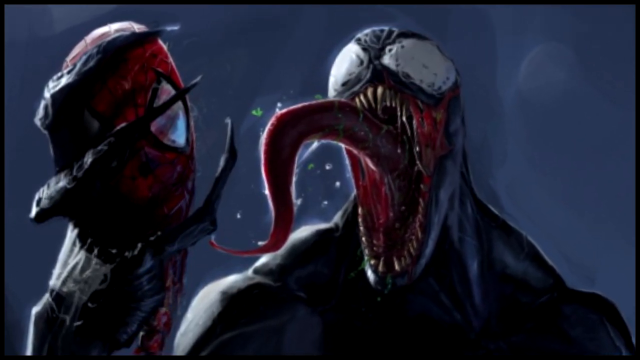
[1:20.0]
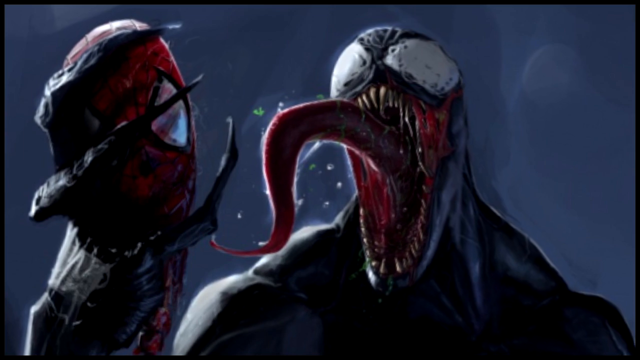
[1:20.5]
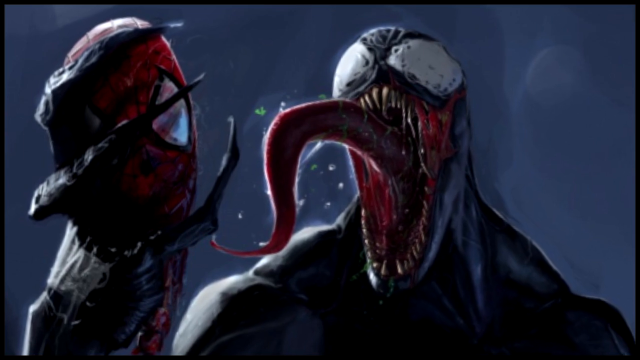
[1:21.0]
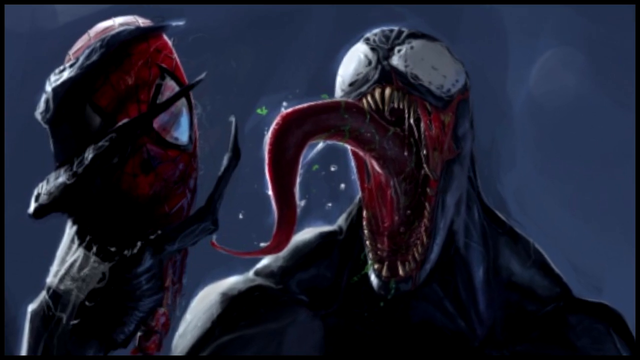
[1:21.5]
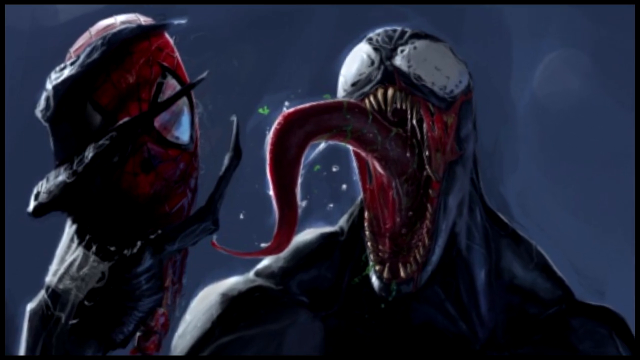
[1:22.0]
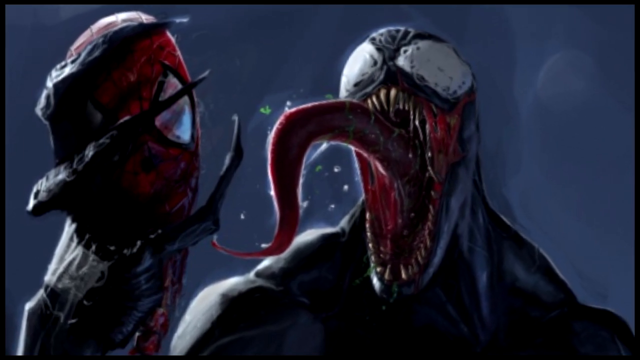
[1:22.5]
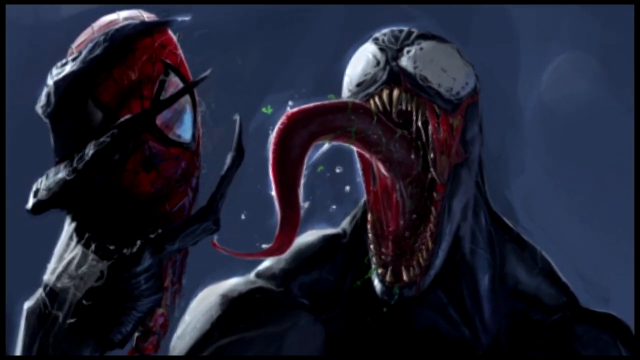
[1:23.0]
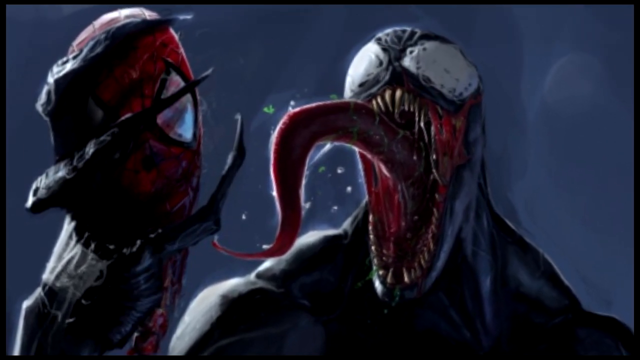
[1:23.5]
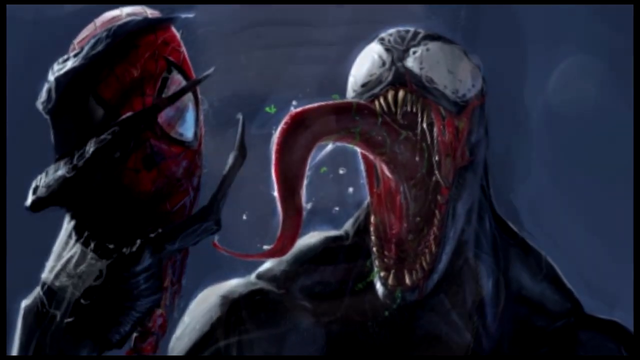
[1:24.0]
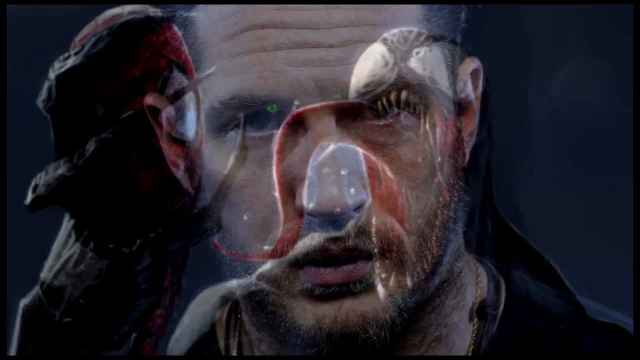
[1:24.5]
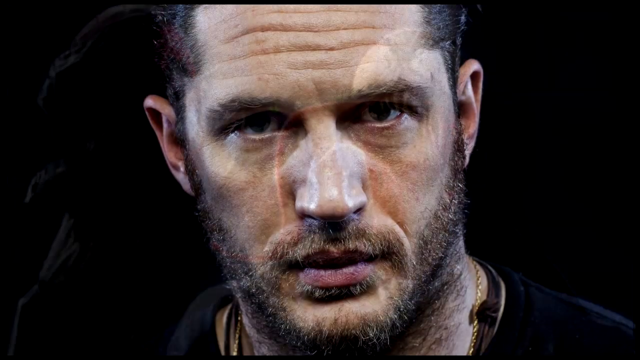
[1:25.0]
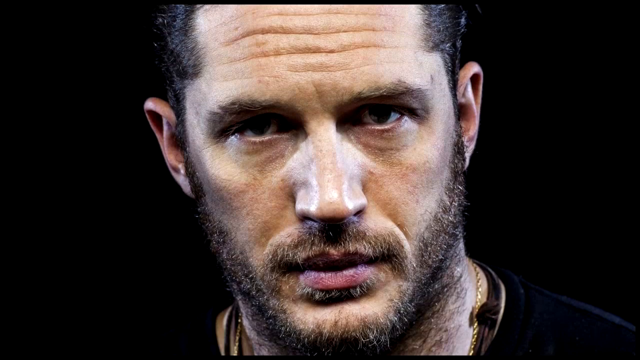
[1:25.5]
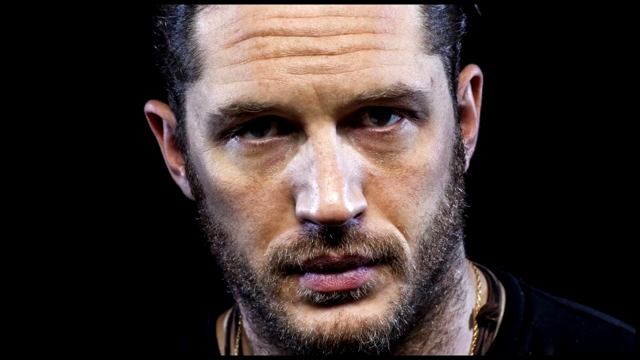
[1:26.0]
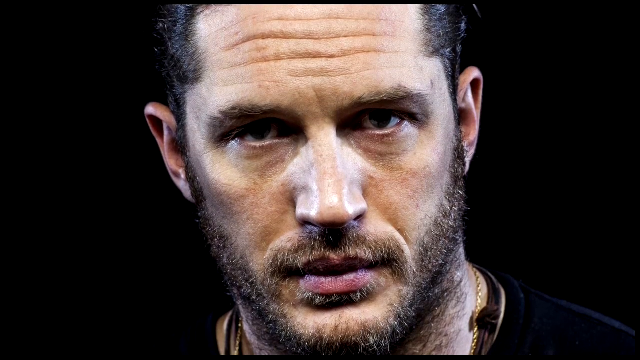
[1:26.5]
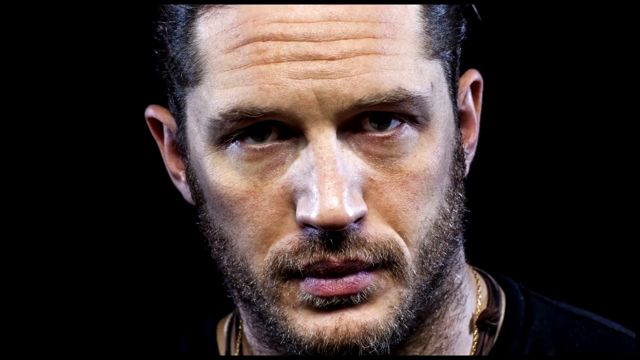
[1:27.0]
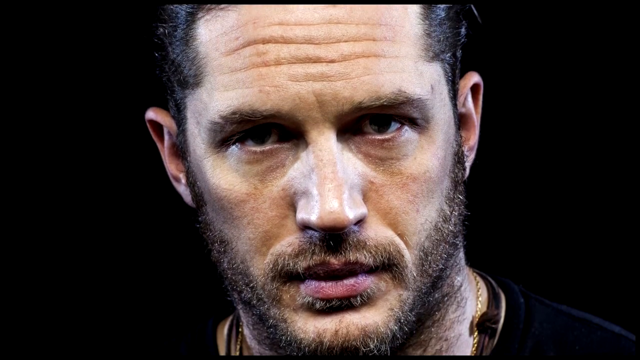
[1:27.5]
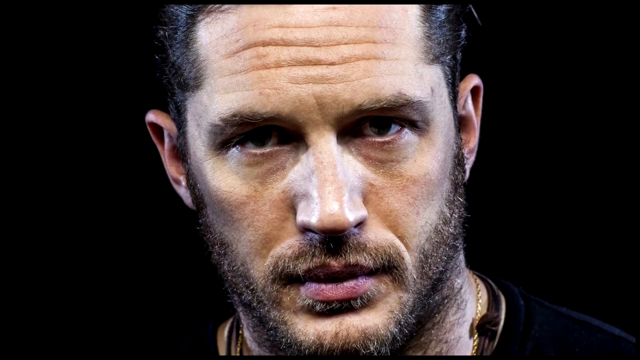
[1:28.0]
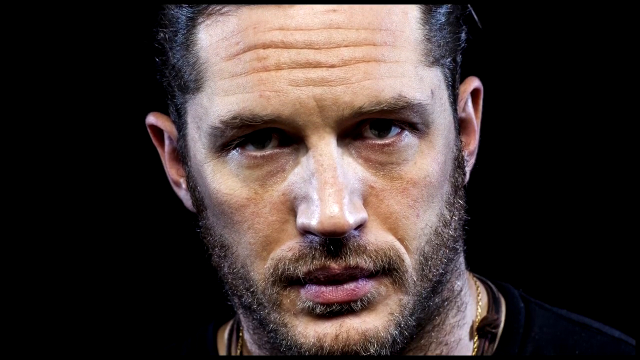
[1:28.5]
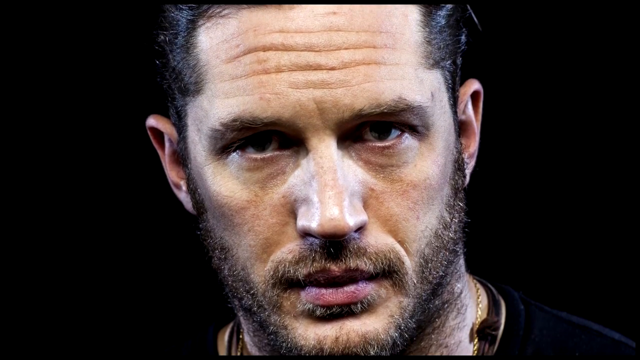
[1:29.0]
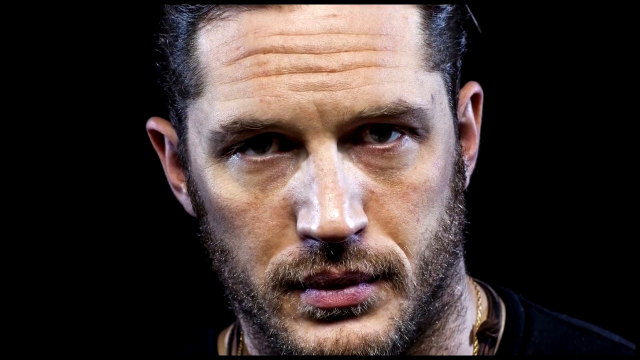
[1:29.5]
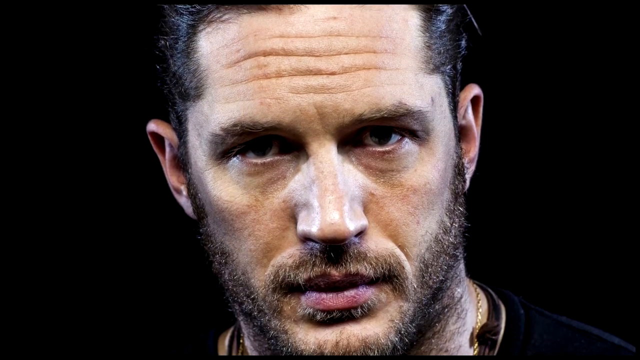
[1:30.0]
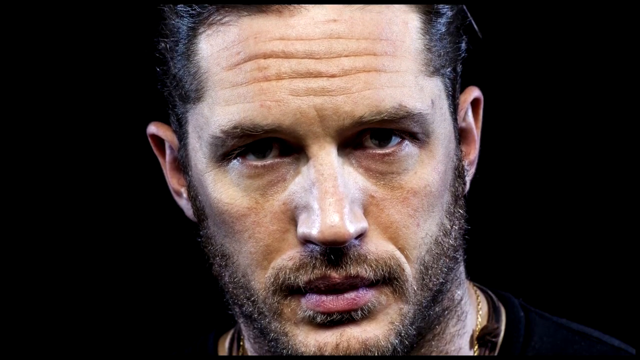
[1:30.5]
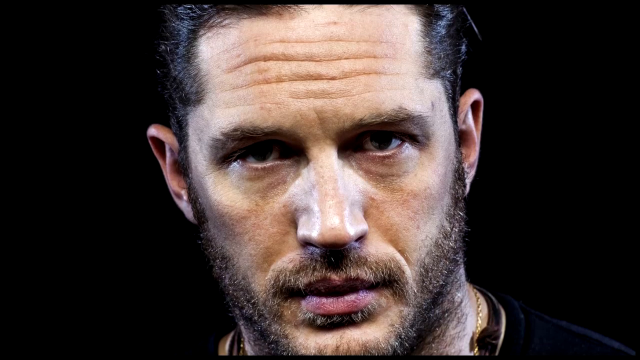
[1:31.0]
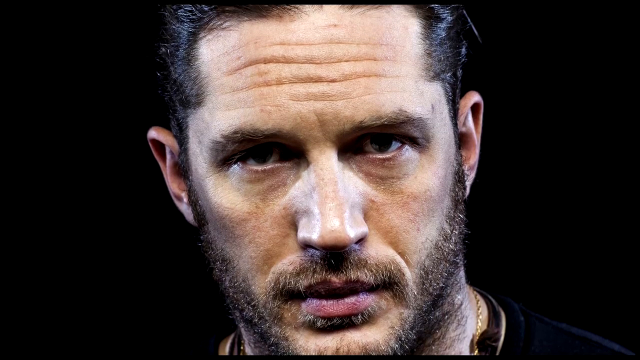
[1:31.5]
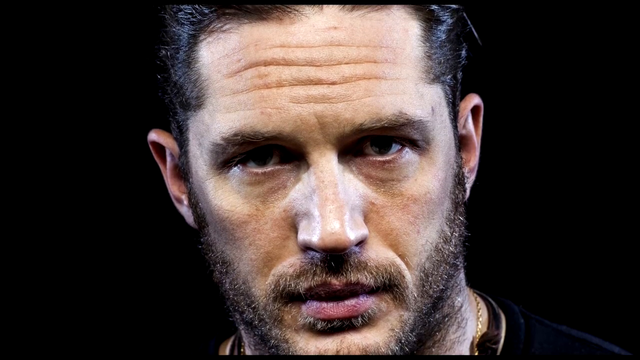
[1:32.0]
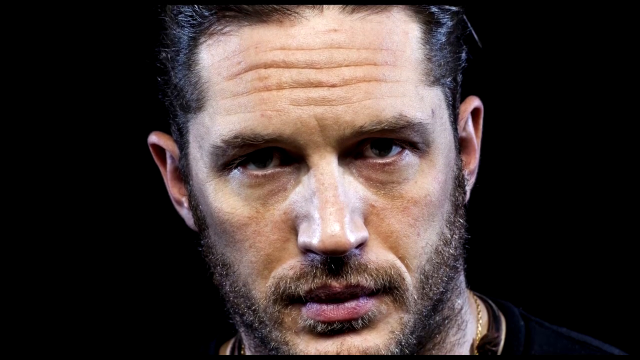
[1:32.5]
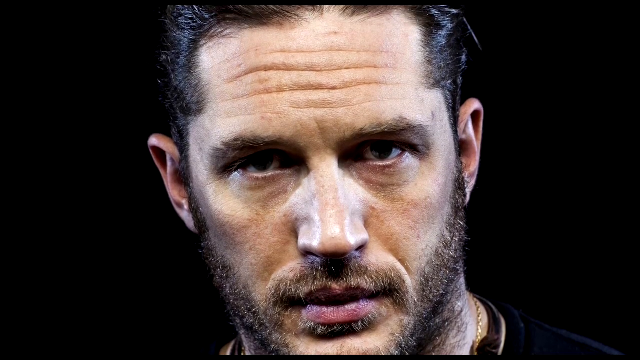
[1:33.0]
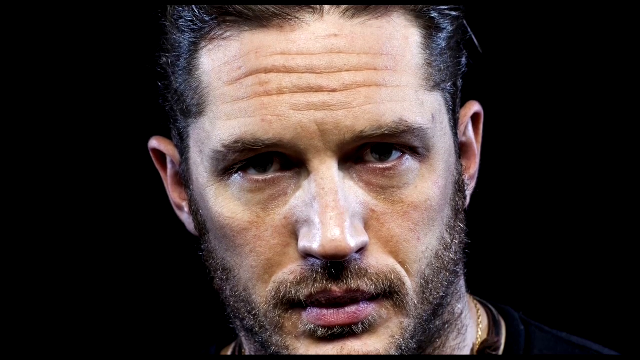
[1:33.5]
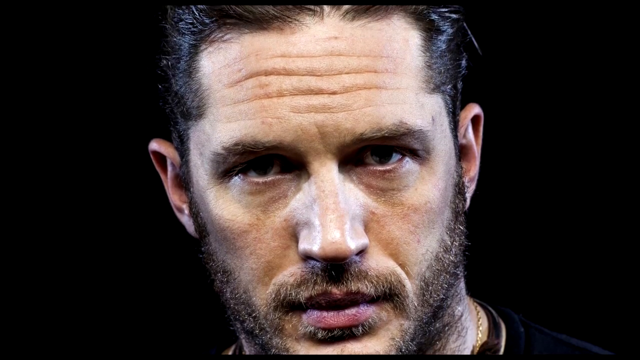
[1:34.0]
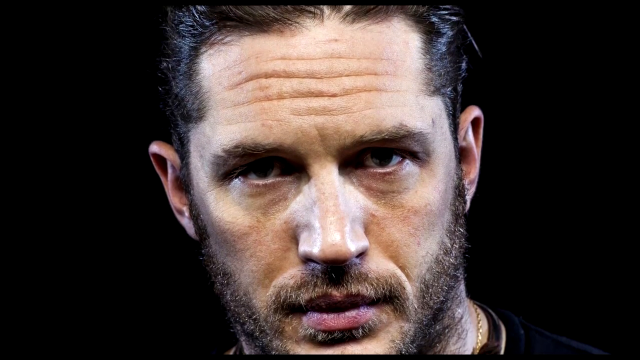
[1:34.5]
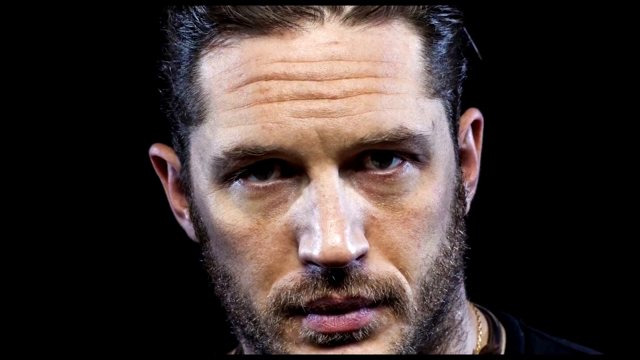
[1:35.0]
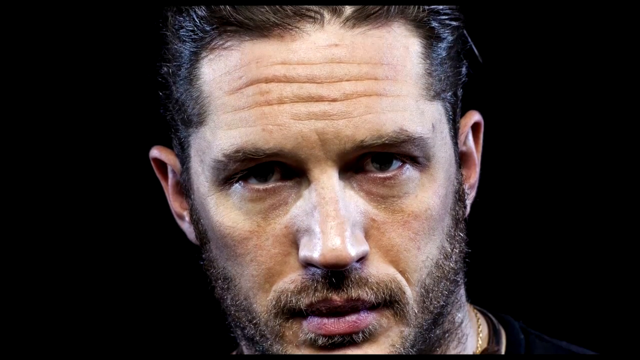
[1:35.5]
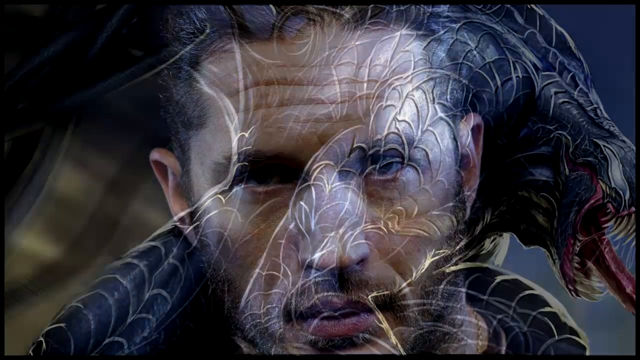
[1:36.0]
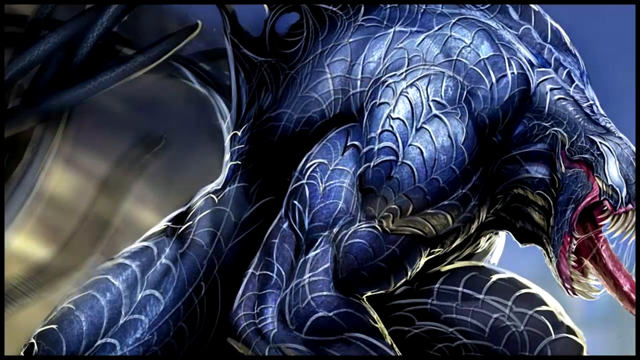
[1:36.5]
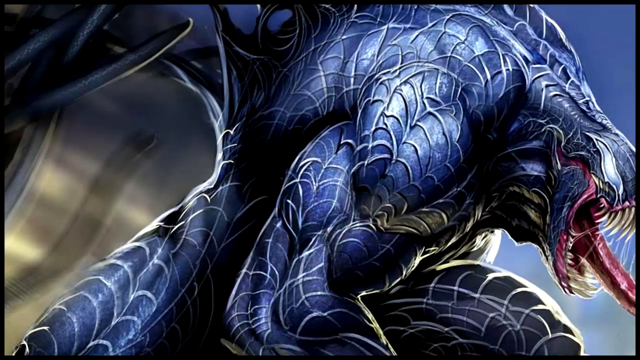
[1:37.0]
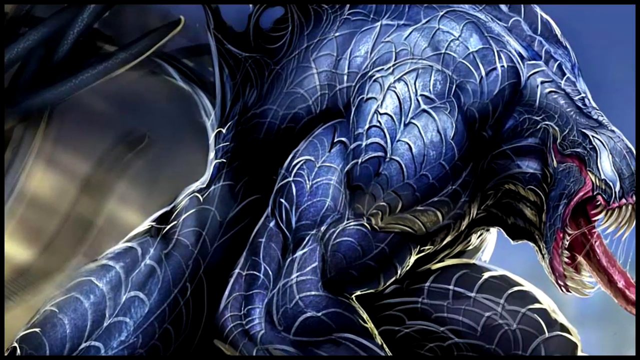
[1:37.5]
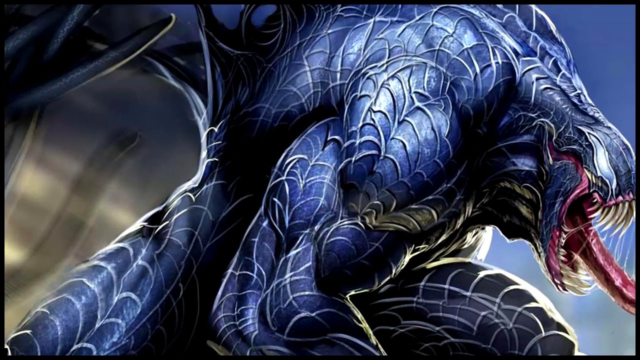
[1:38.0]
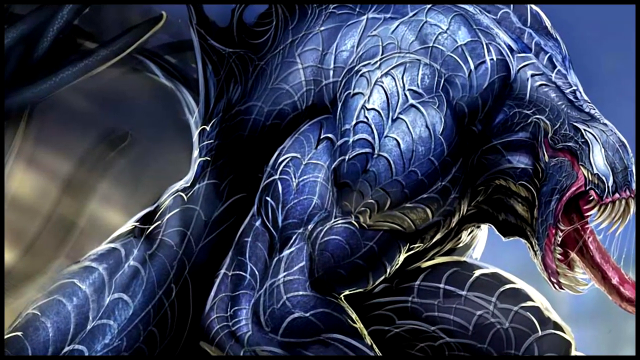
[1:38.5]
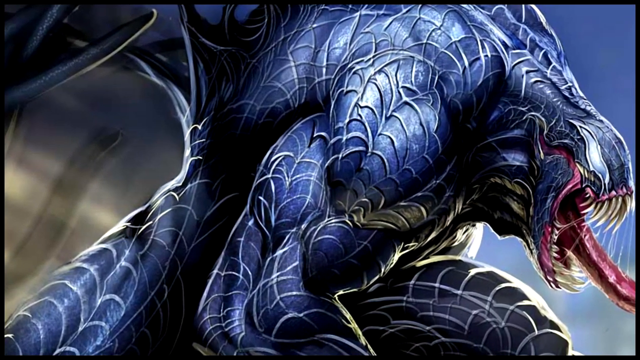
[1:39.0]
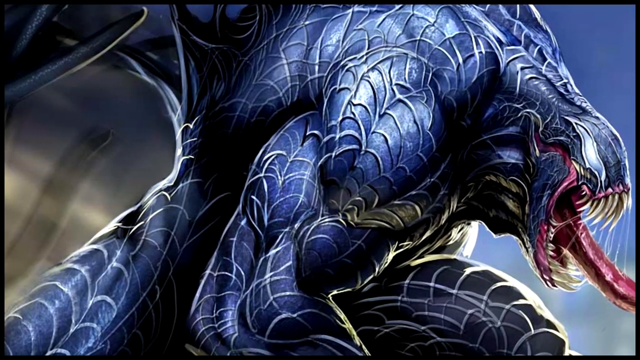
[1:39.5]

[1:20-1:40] Another illustration appears; it looks like night time, with what is possibly a dark blue, slightly milky background. The Venom creature is visible from the upper chest above its pecs upward. It holds something in its right claw, on the left side of the image, which seems to be a Spider-Man mask resting in the palm, with the claw folding around it. The mask faces forward, showing one silver eye outlined in black on the red mask. Three talons are visible holding the mask. Behind it is the rest of the creature's very muscular black upper body. Its tongue sticks out, slinking forward, with the same razor teeth, red inside of the mouth, spittle attached to the teeth and tongue, and two white patches where the eyes should be.